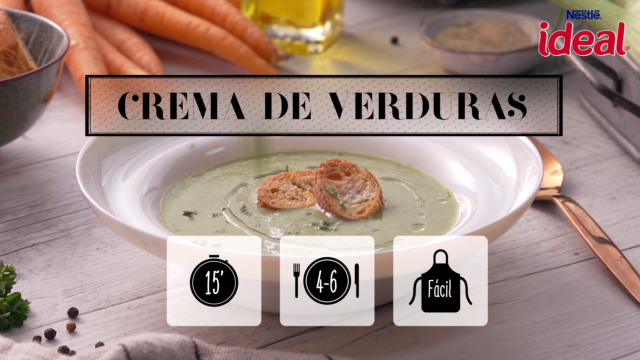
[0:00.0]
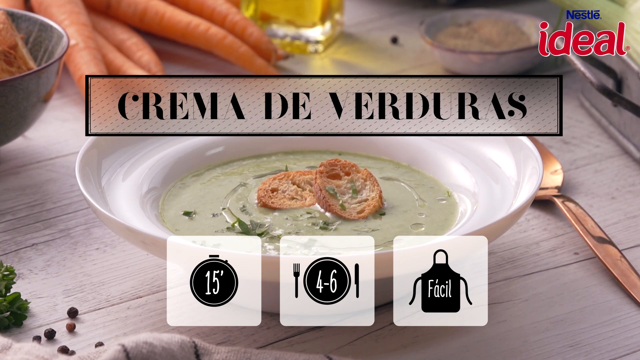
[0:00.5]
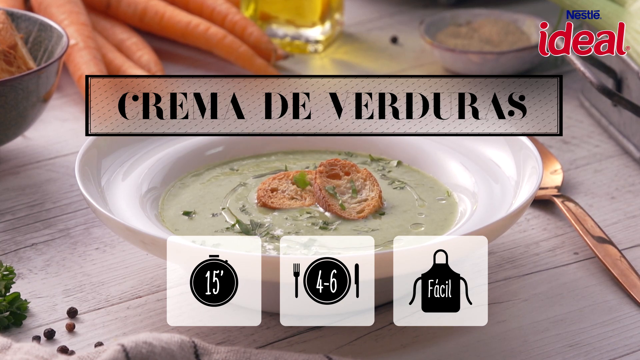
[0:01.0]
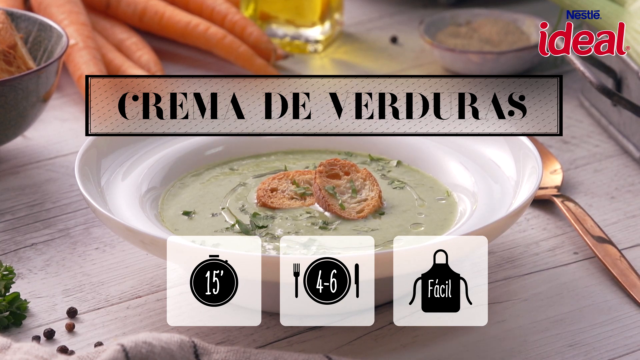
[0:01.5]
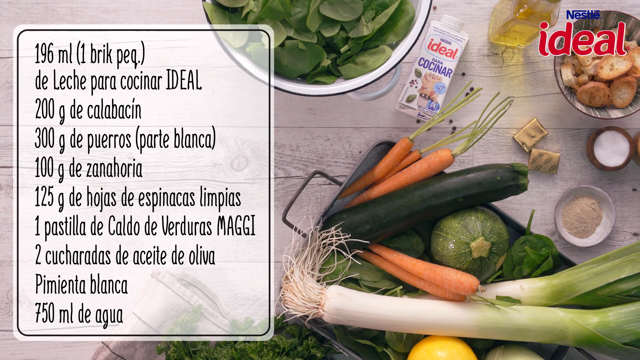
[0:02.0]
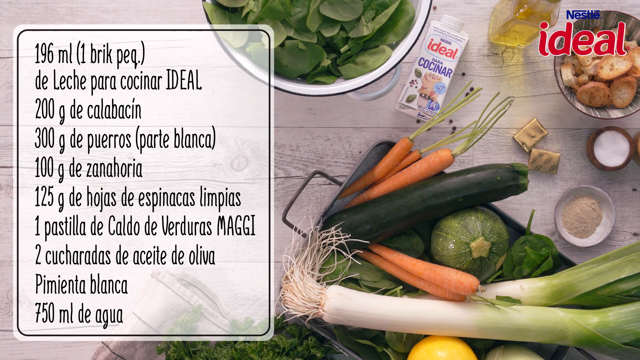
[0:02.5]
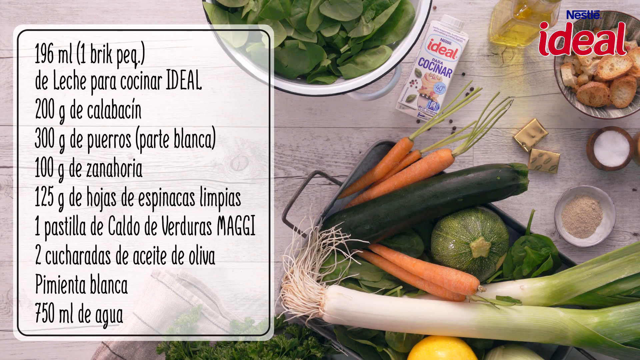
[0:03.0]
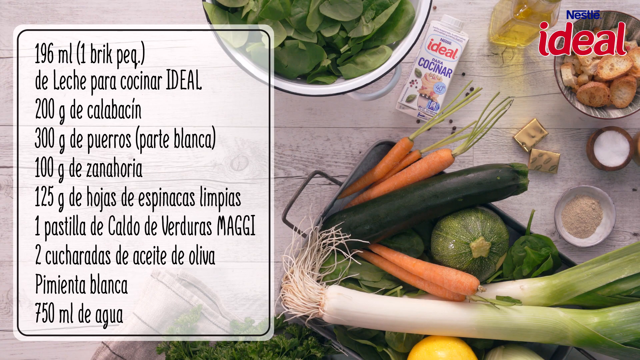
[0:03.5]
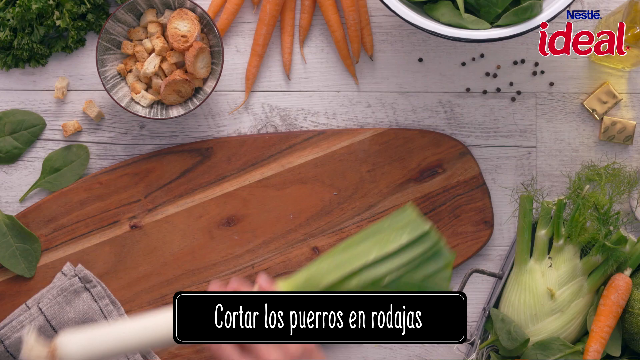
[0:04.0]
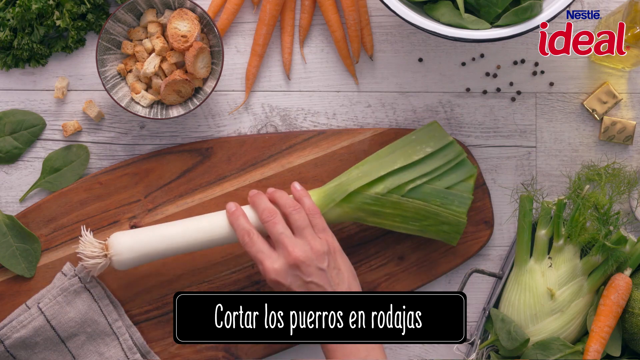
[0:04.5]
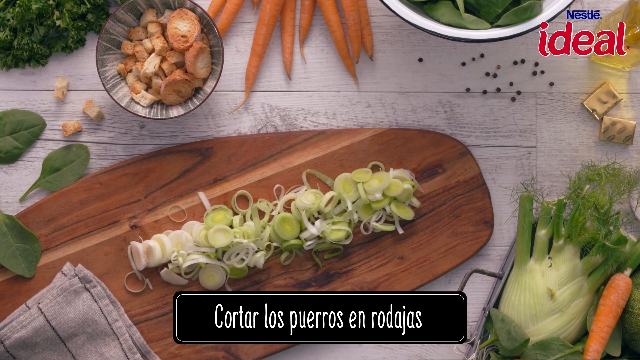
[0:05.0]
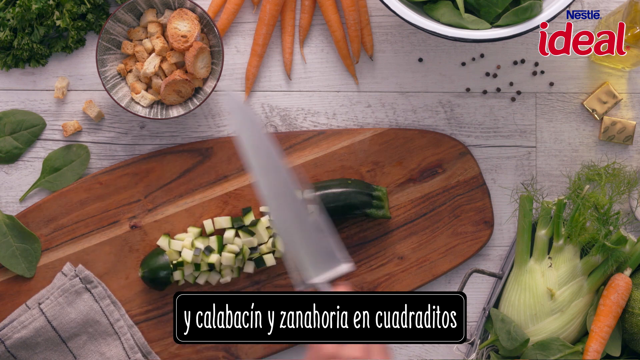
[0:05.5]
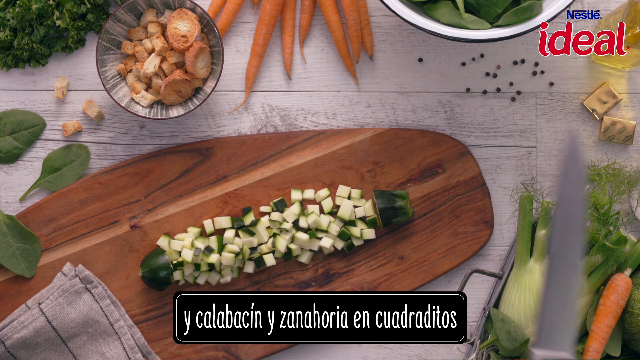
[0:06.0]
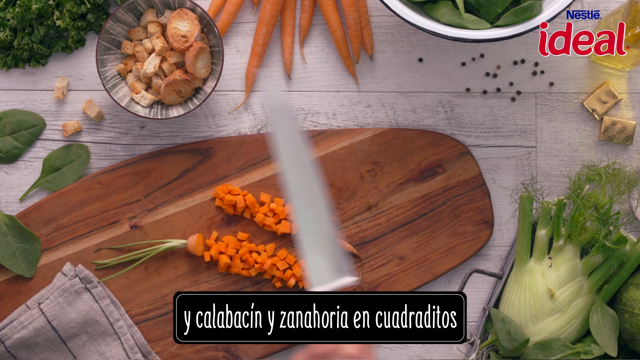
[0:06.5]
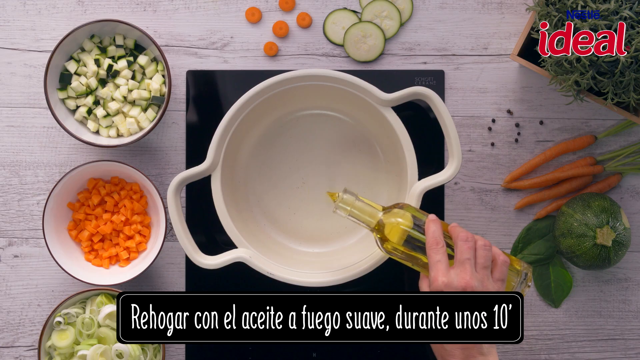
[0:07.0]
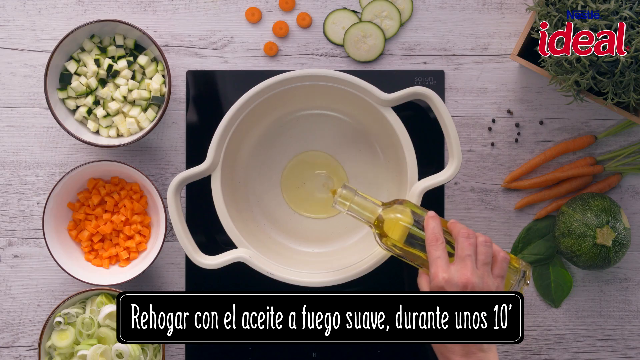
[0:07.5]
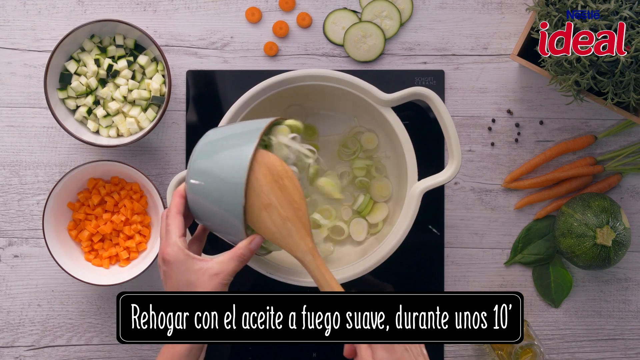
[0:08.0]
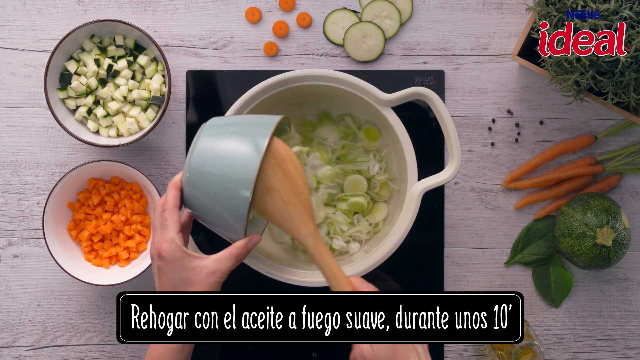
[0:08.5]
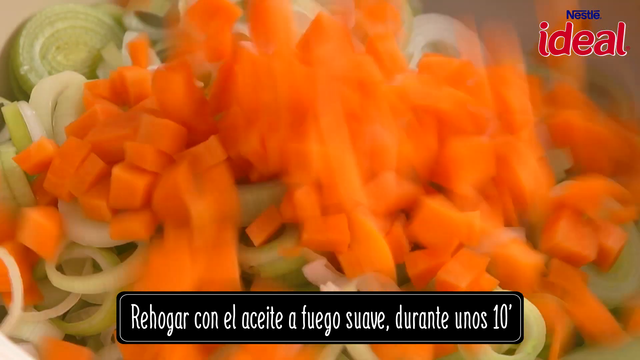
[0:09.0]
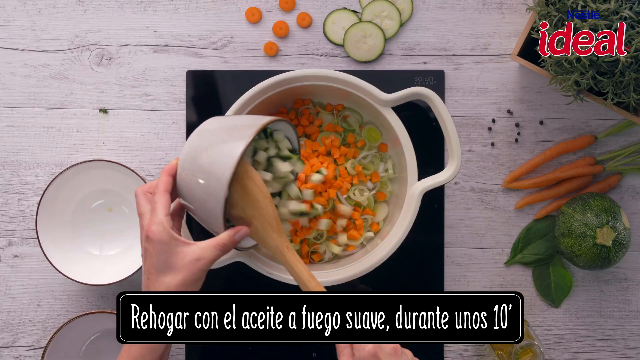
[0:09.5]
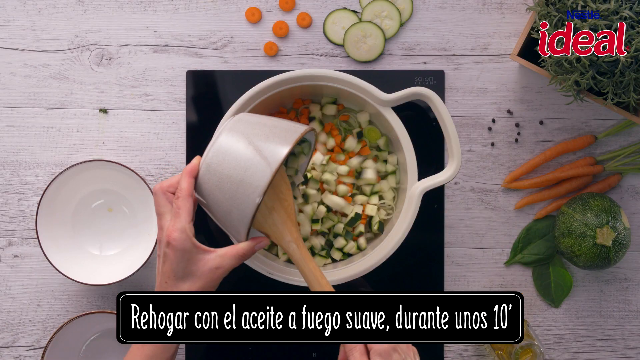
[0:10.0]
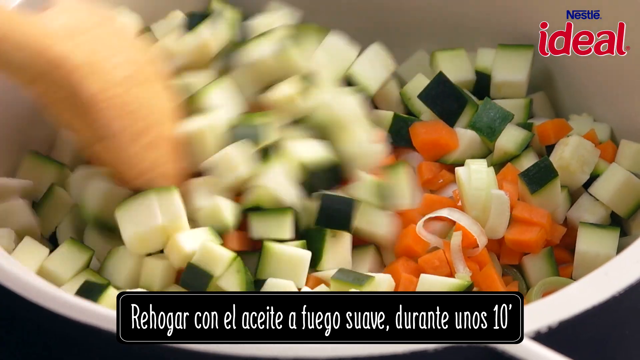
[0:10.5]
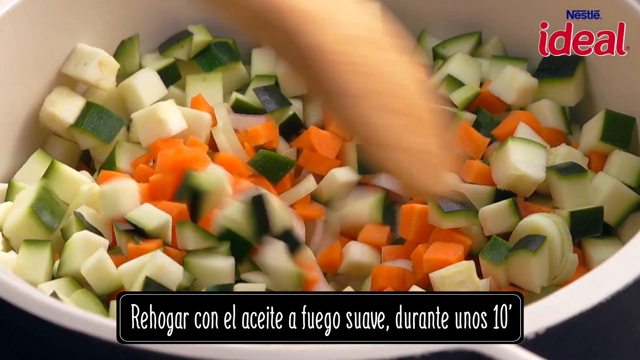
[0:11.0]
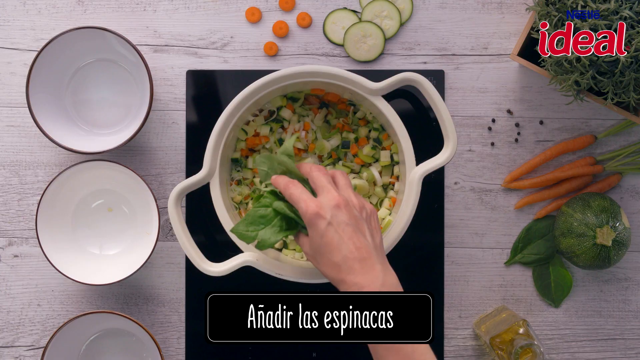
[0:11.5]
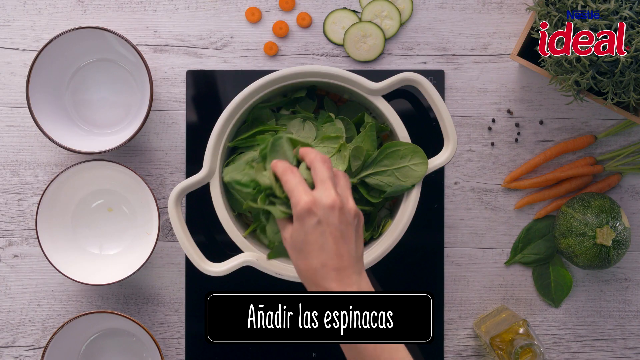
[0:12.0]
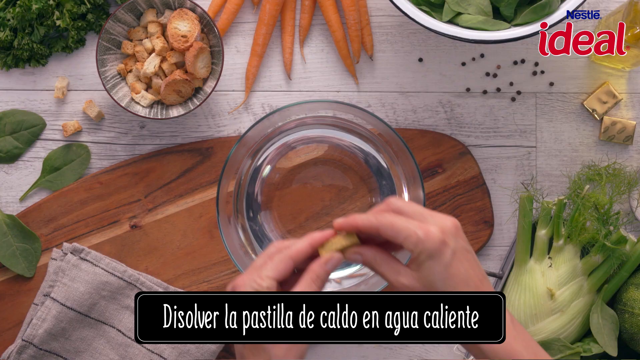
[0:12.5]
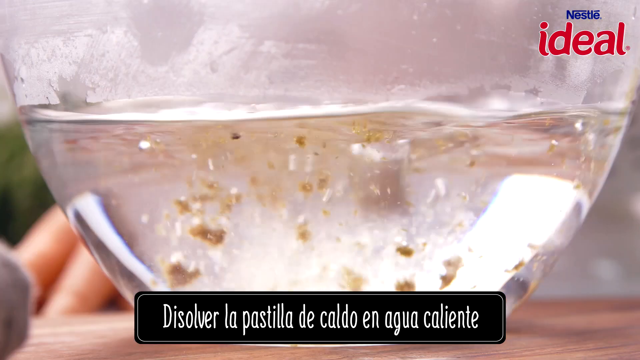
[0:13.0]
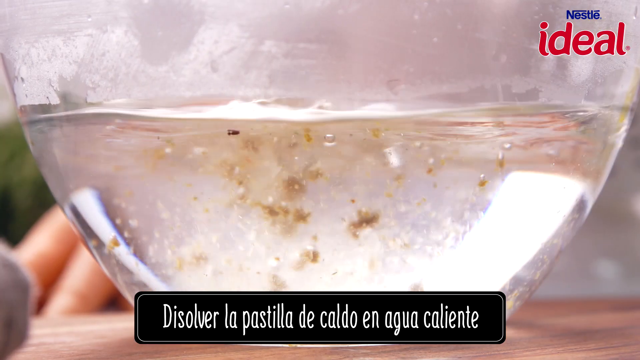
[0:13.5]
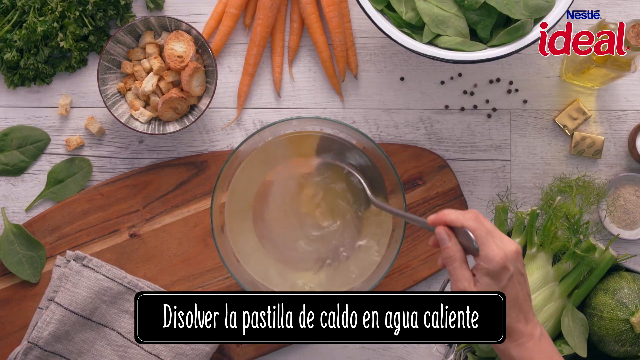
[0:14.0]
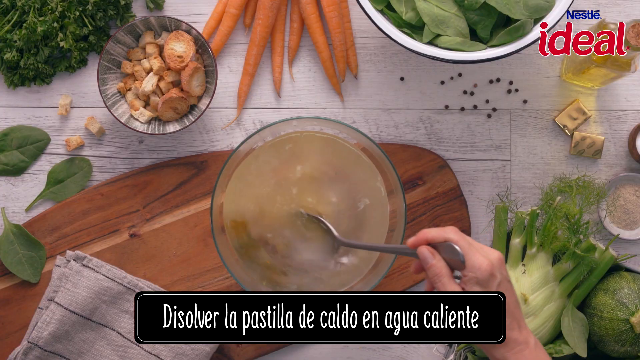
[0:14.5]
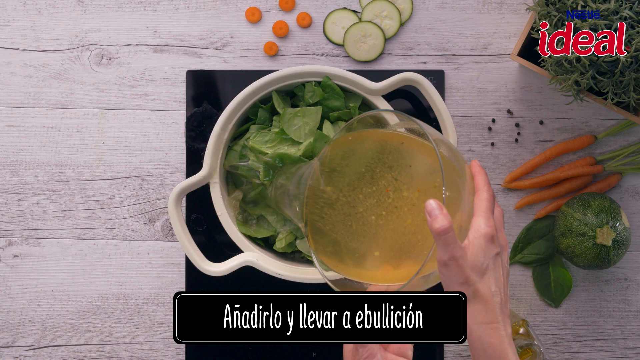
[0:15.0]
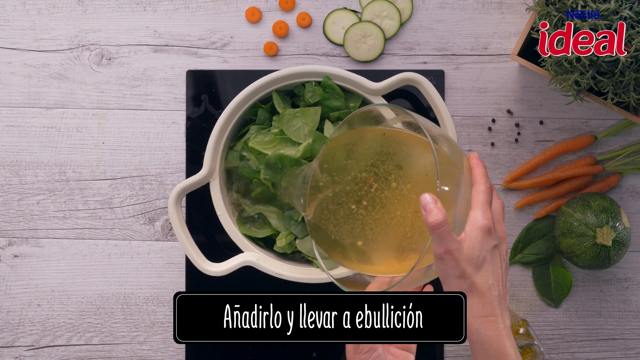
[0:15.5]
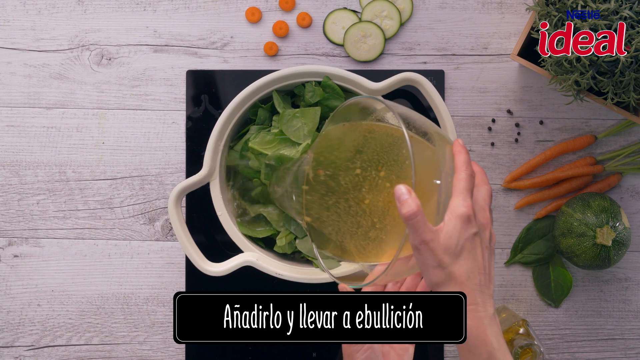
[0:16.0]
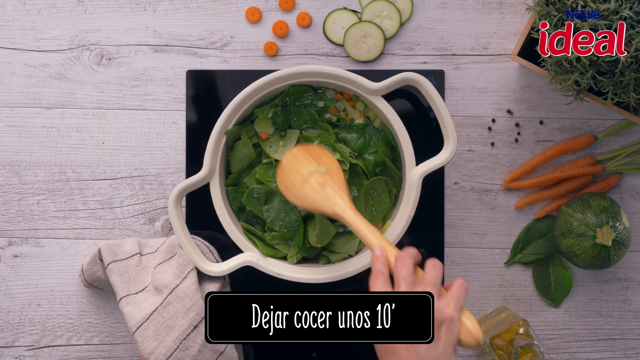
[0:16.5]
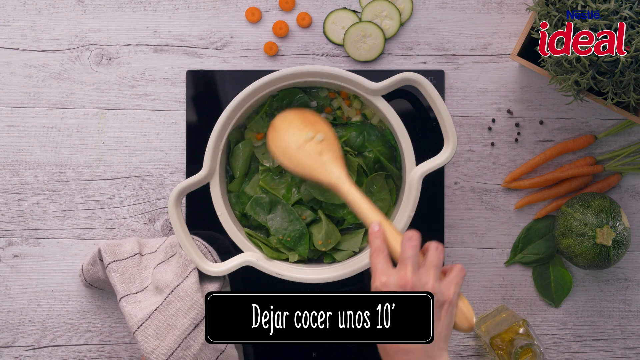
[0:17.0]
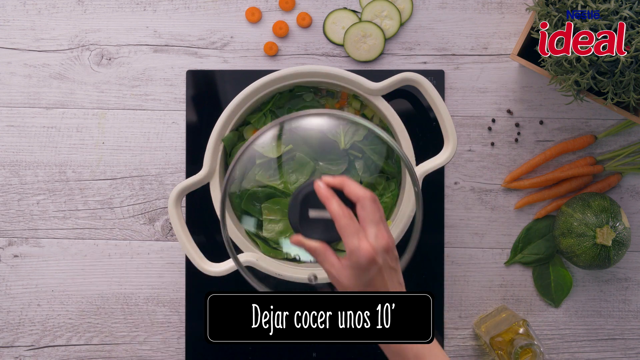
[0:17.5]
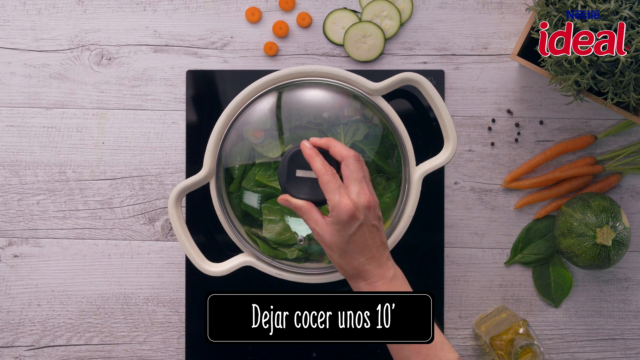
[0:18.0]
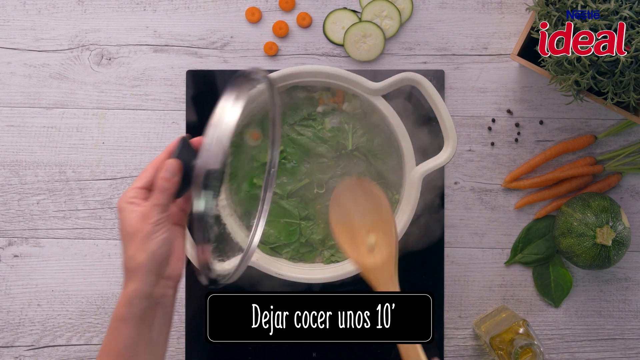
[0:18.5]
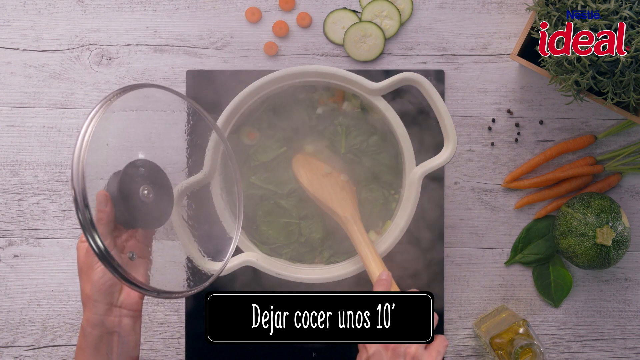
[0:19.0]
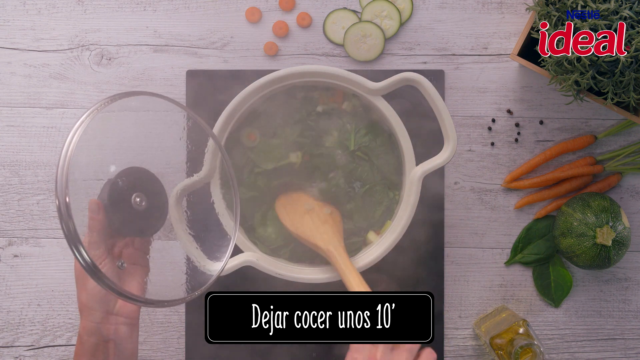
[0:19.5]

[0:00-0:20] An image opens the video: a bowl of somewhat green-looking soup with a couple of toasted pieces of bread on top. A text box above it reads "crema de verduras." In the upper right corner of the screen is the Nestle logo with the word "ideal" in red underneath it. The view switches to a recipe on the left side of the screen, in black text inside a white text box, apparently in Spanish. On the right side are a number of ingredients: a bowl of spinach, a bottle of Ideal Cocinar, some kind of liquid, a bowl of toasted breads, and a platter with all kinds of vegetables such as zucchini, leeks, and carrots. A leek is placed on a brown chopping board and is then shown cut into pieces. The same is done with the zucchini: a knife is passed over it and it is chopped into cubes. The carrots are done the same way. Next, a pot is on a hot plate. Oil is added to the pot, followed by the leeks. A close-up shows the carrots, then a wide view shows the zucchini being put in. A close-up shows everything being stirred, and a wide view shows a lot of spinach being added. The hot plate is then replaced with a glass bowl containing some liquid, and what appears to be some kind of bouillon is added to it; as the water is stirred, it turns a somewhat light brown color. Back at the hot plate, the bouillon is added to the vegetables in the pot. The mixture is stirred with a wooden spoon and a lid is placed on top. The lid is then taken off, showing the vegetables cooked and the spinach a little wilted.